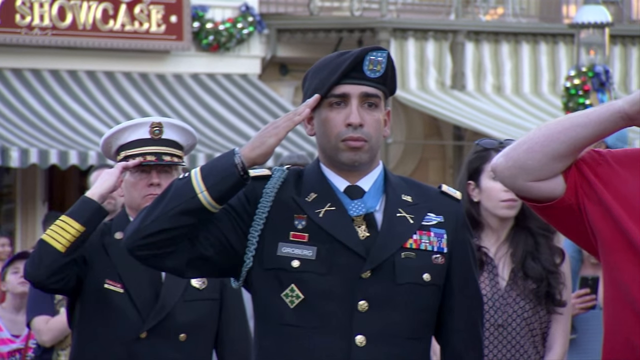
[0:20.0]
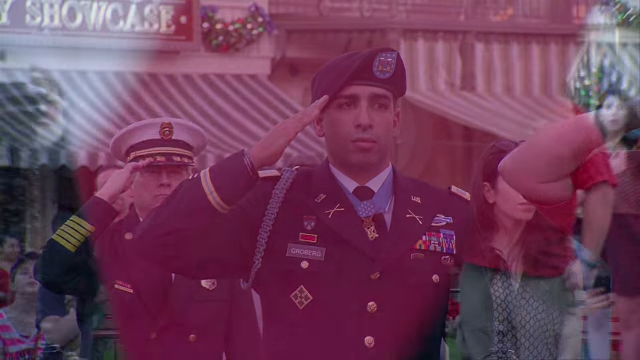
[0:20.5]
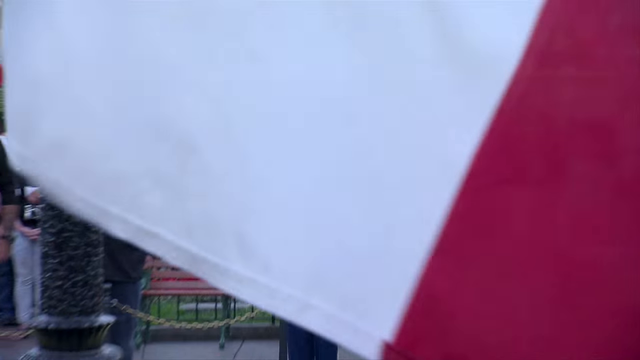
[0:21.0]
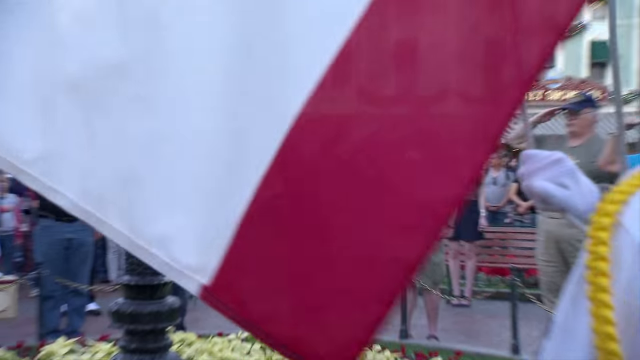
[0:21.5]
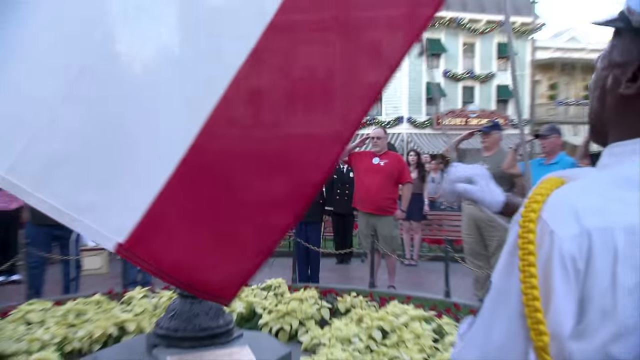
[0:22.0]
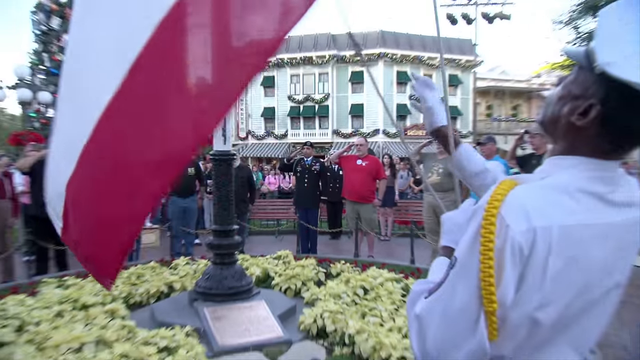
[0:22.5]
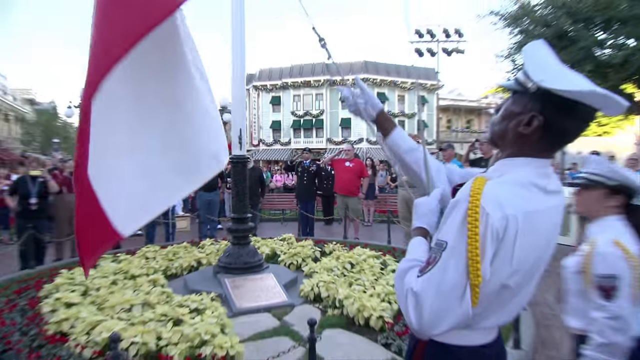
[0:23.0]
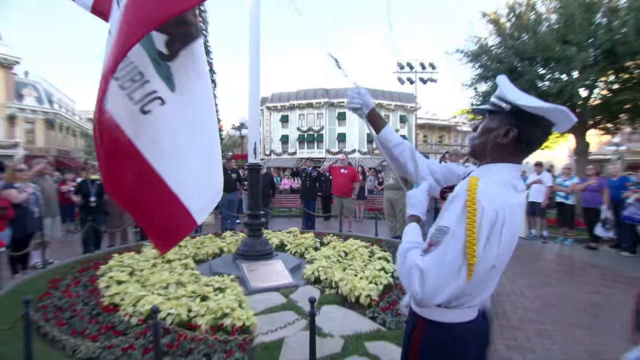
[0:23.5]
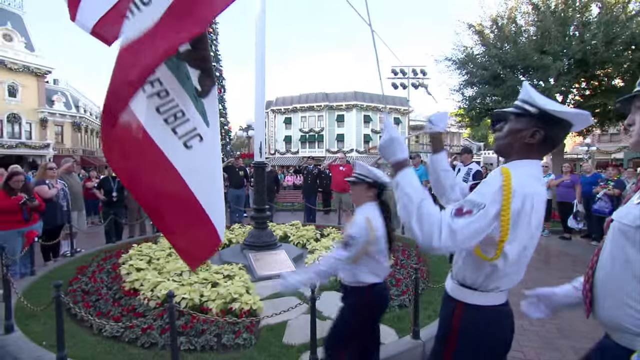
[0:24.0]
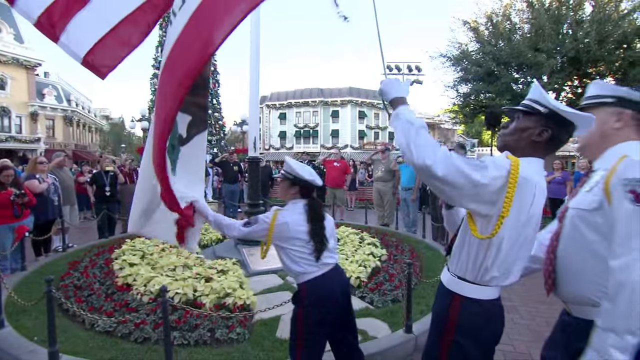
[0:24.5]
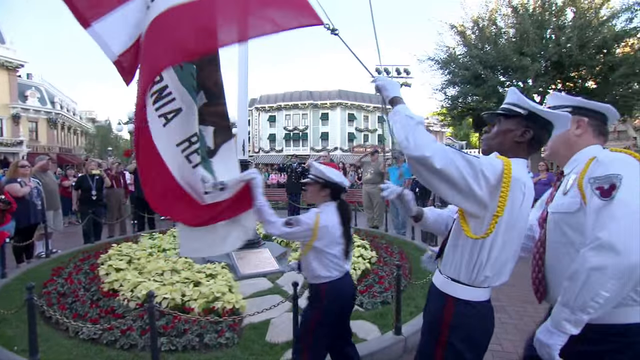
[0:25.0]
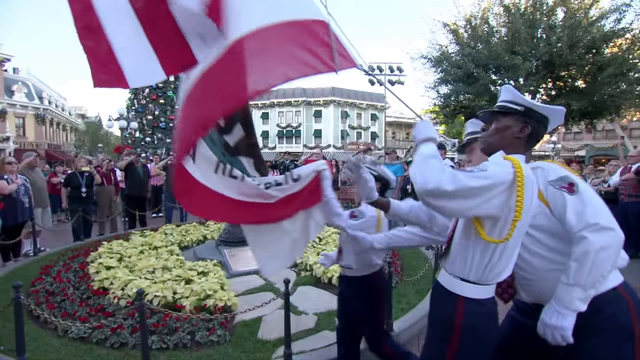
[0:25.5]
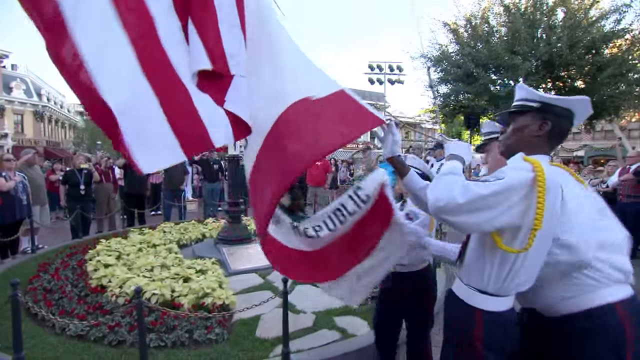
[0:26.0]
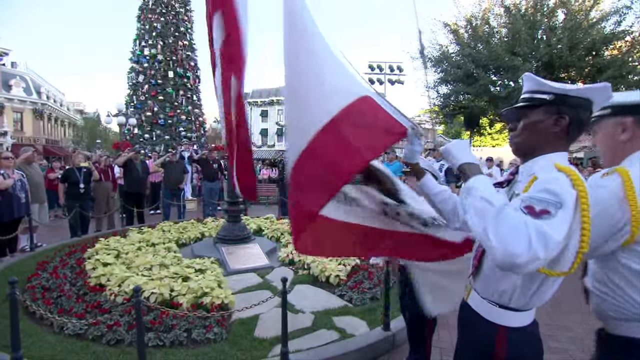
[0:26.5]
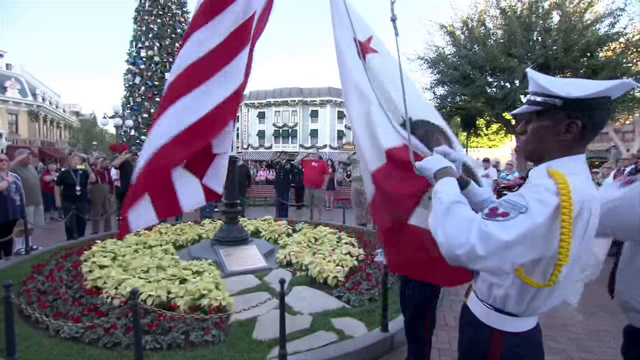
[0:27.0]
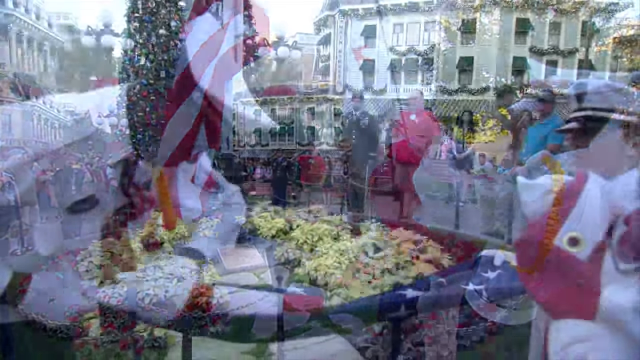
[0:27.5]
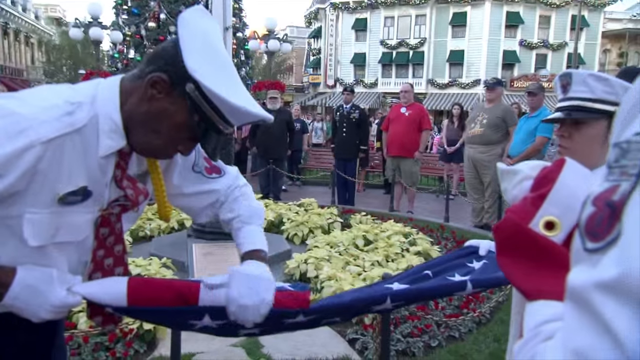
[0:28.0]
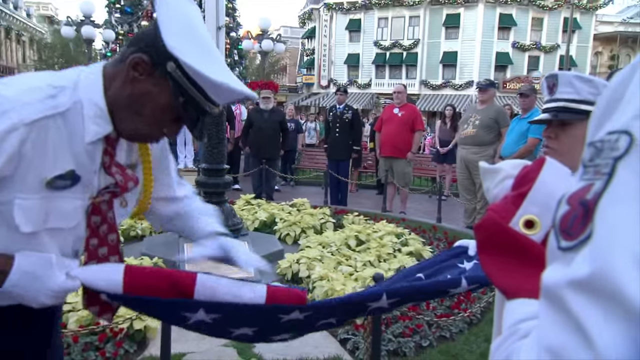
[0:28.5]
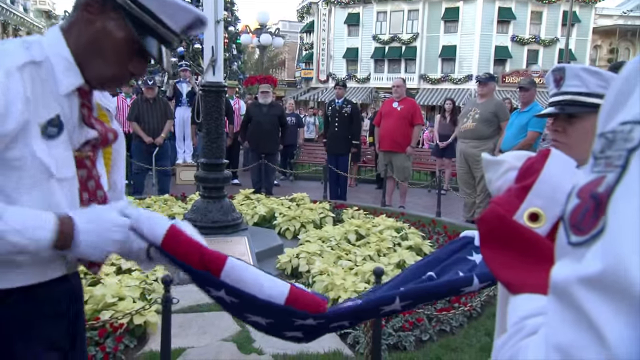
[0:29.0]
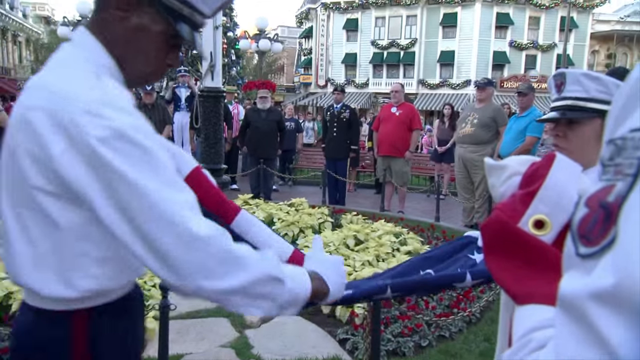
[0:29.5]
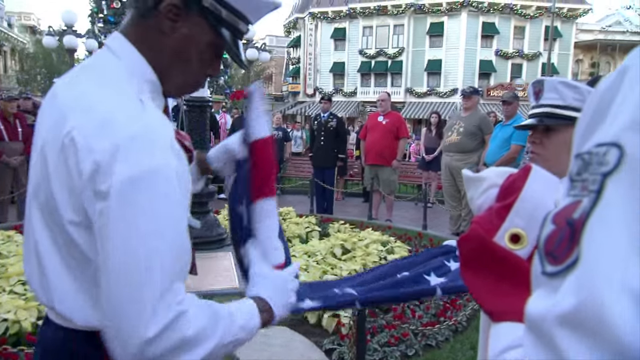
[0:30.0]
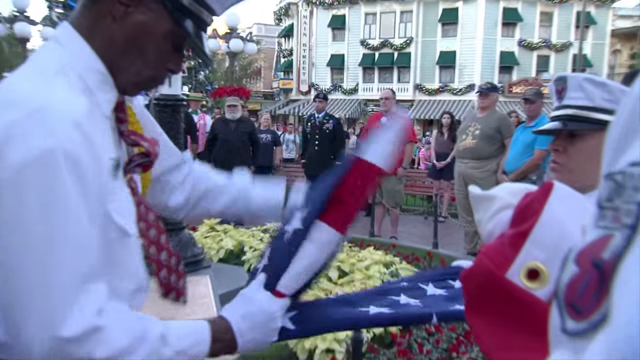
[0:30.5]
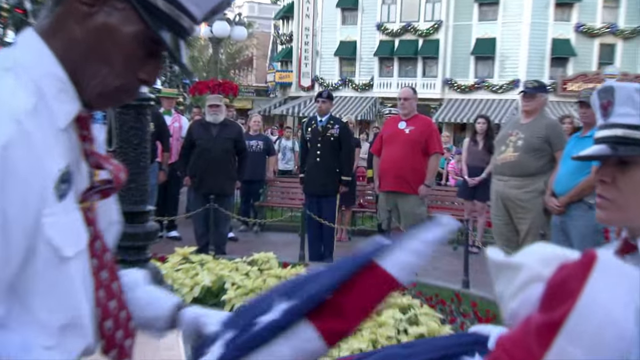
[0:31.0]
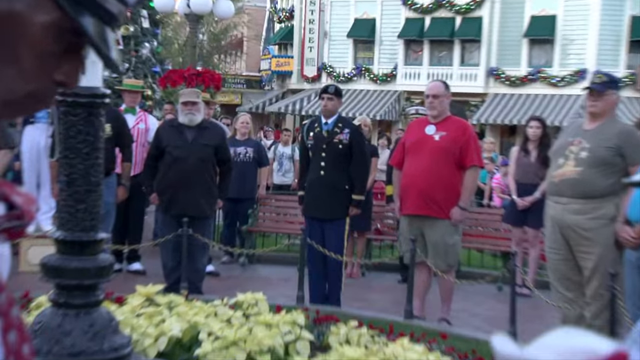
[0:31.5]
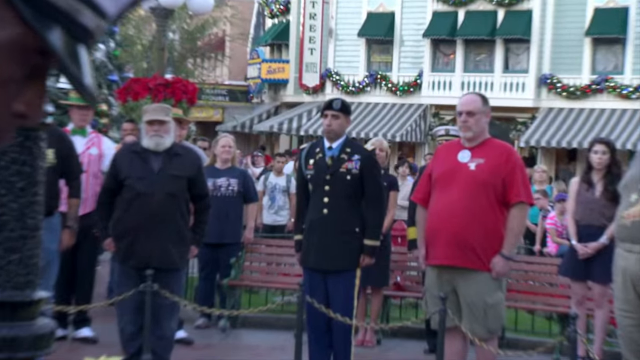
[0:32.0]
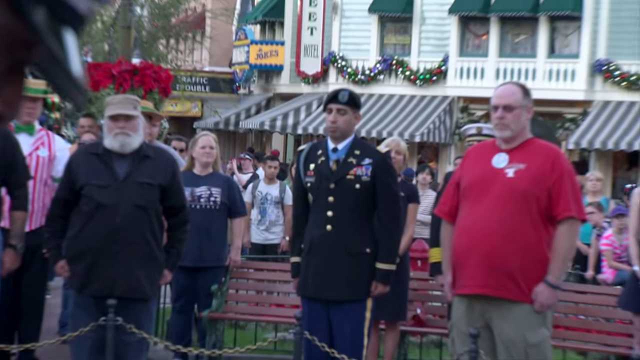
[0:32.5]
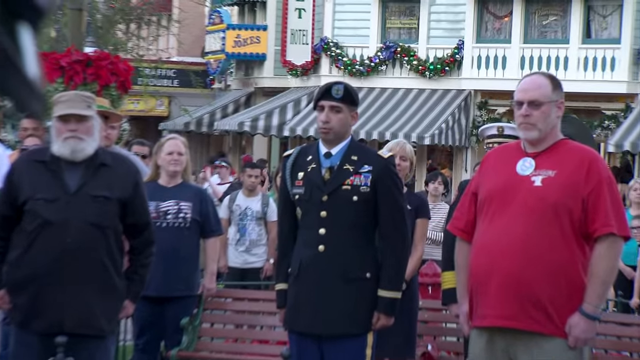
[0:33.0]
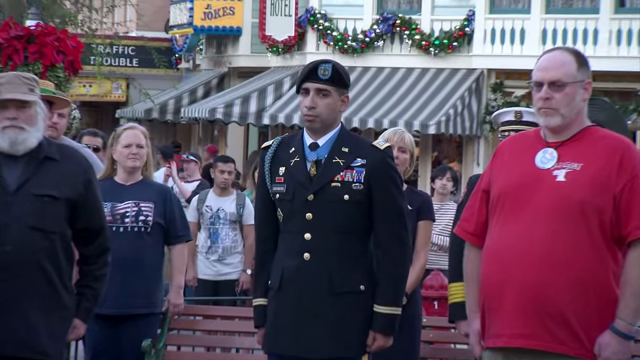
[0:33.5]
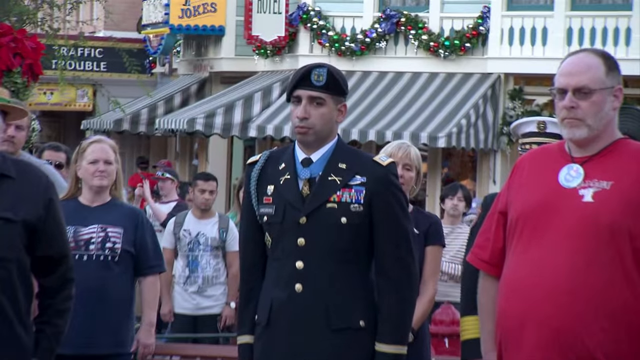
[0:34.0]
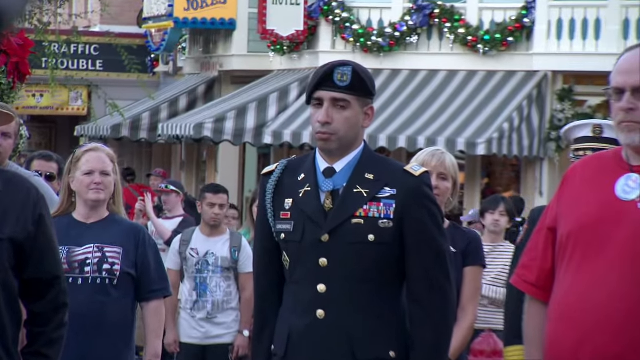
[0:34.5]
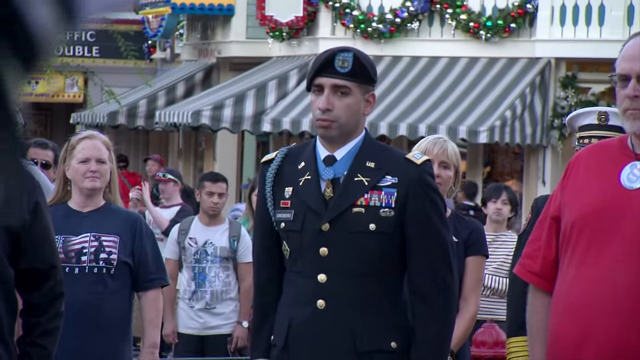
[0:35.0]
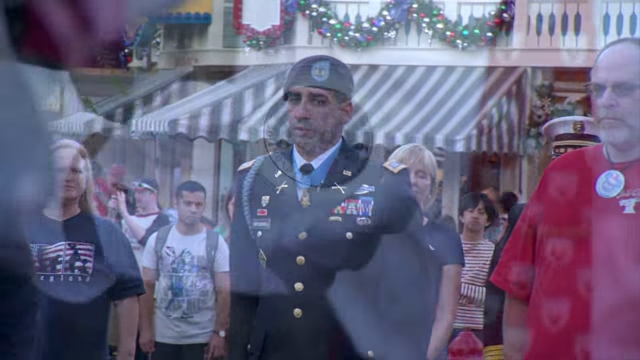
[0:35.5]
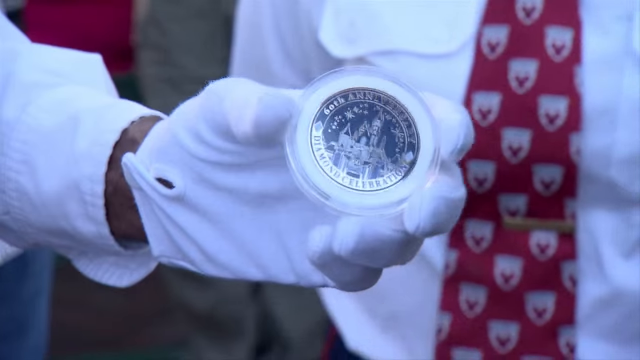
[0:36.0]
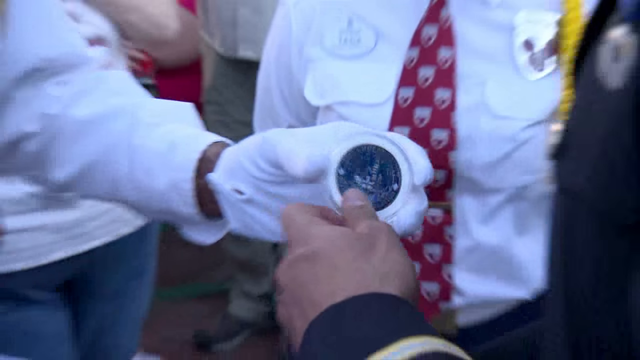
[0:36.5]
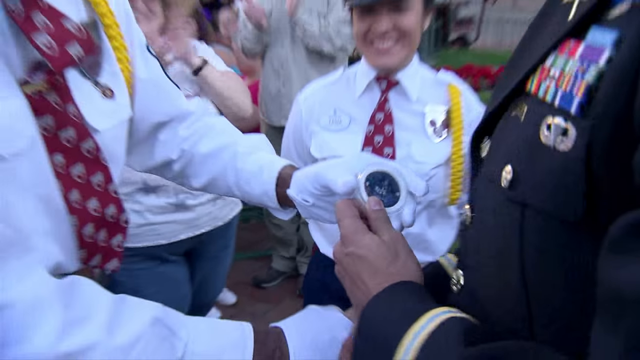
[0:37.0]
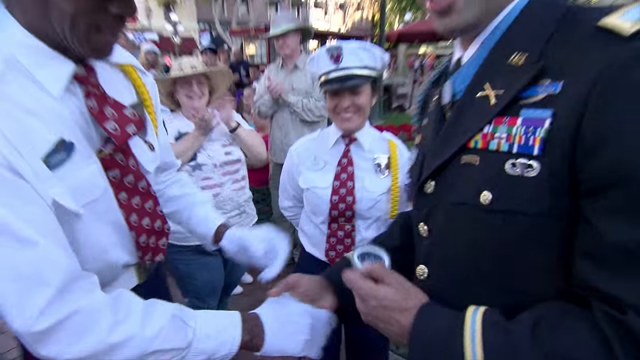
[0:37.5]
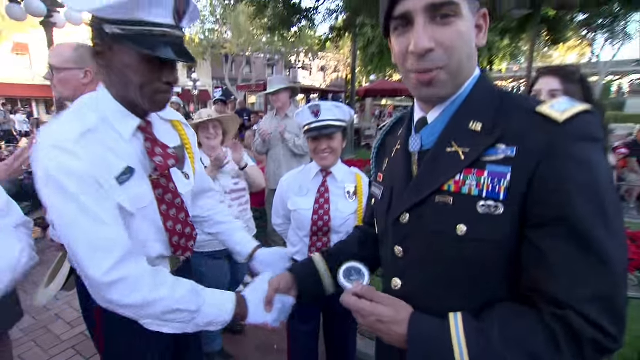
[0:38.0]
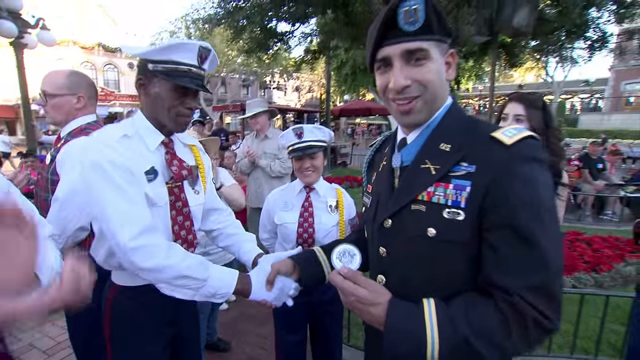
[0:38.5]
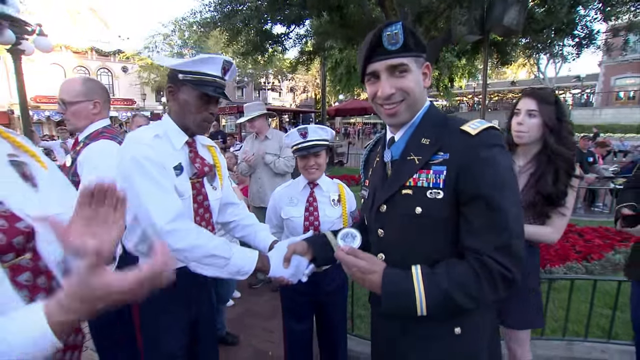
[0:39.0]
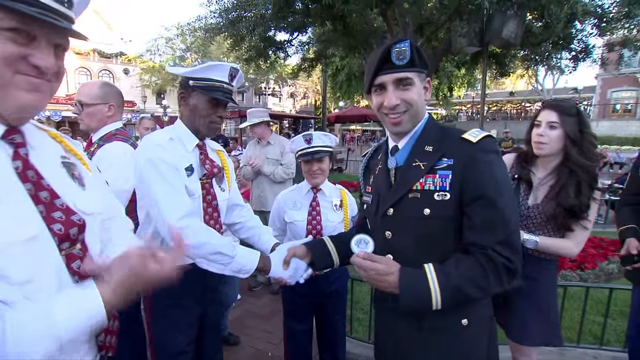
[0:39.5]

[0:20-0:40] The army man has dark hair. The camera goes close up on a flag, showing just the bottom red and white of the fluttering flag, held by a man in white. The view pans out to show what looks like the California flag next to the U.S. flag, and the flag is taken down. Two individuals wearing white gloves and long-sleeved white shirts handle the flag: one, a Black man with a red tie, folds it while the other holds the other end. White poinsettias are on the ground in the background. After the flag is folded, the focus returns to Groberg, who stands at attention. The same man who folded the flag presents him with something like a medal that looks almost like a large coin, and they shake hands. Groberg then turns to the camera and says something.